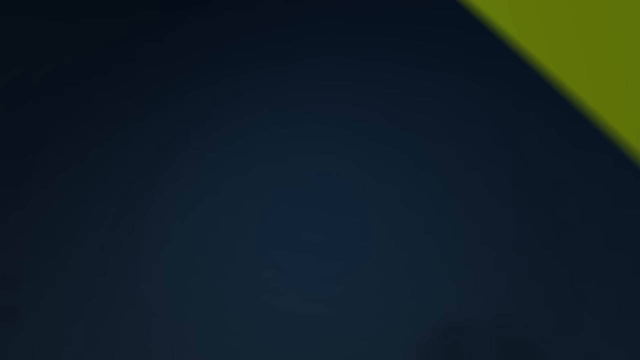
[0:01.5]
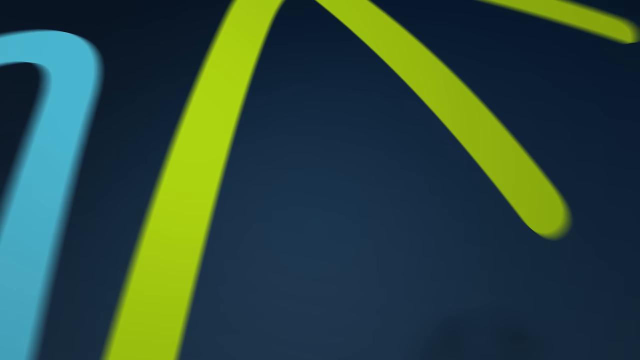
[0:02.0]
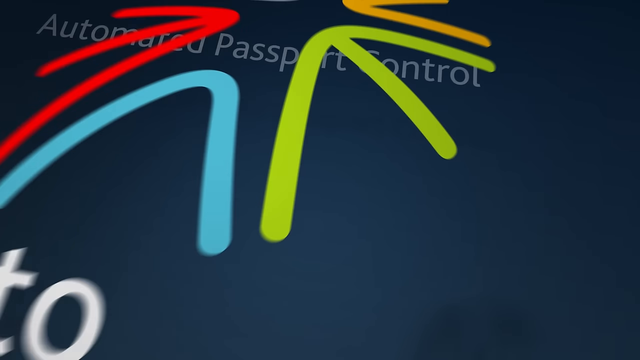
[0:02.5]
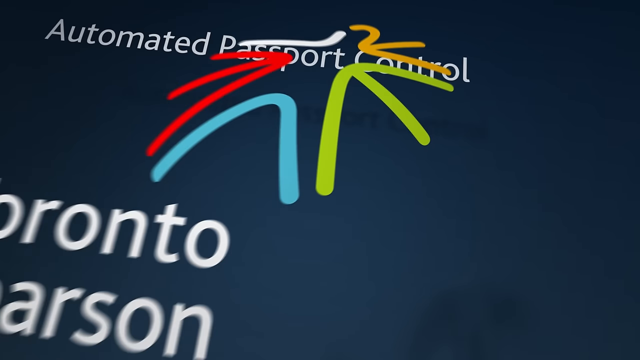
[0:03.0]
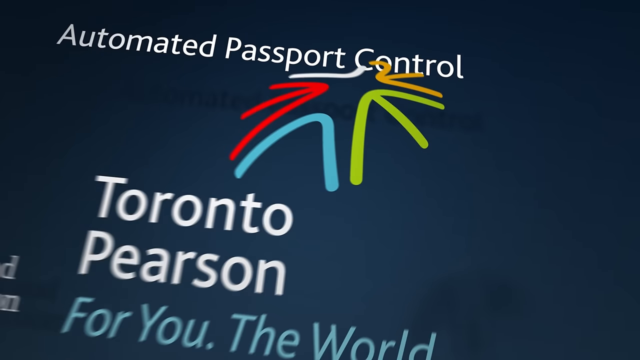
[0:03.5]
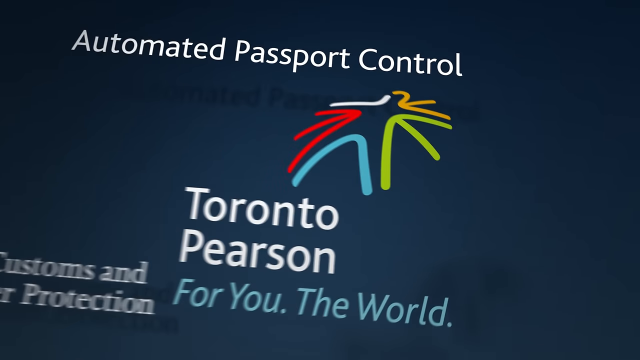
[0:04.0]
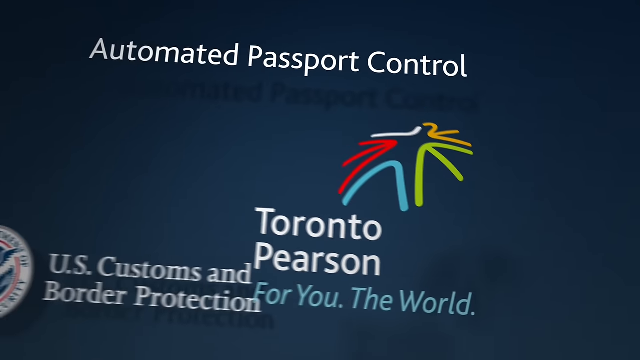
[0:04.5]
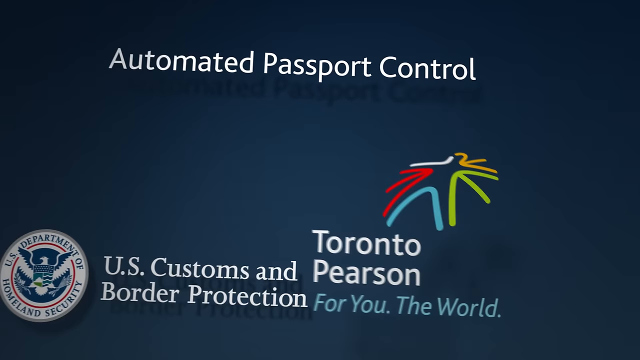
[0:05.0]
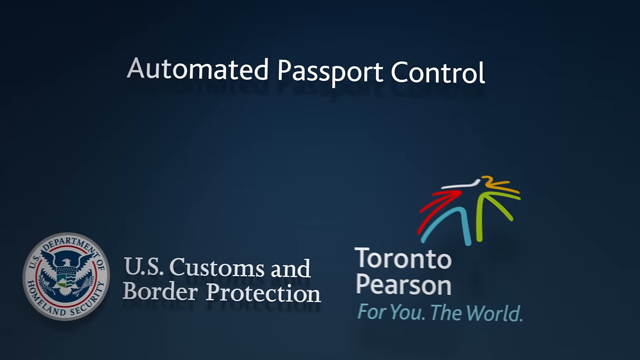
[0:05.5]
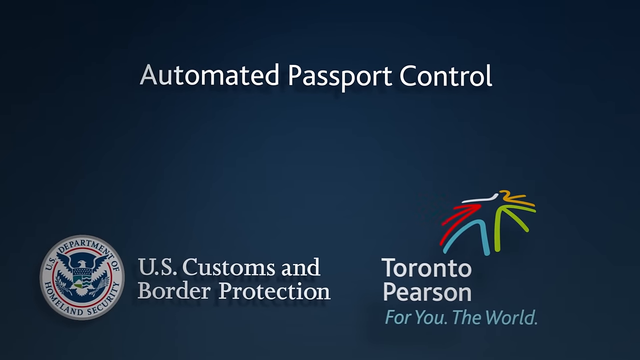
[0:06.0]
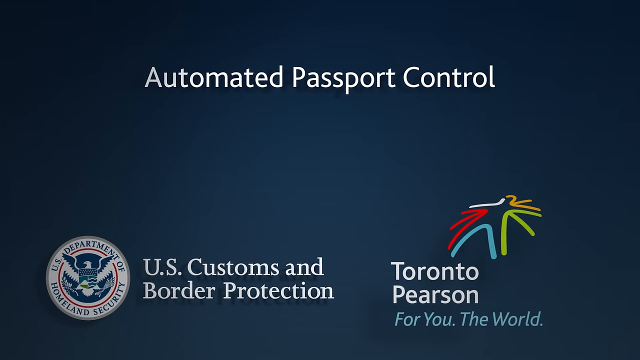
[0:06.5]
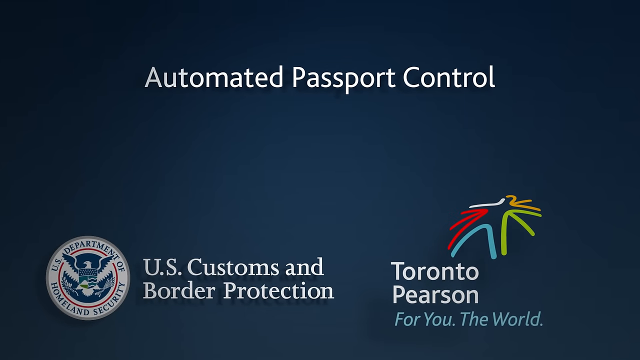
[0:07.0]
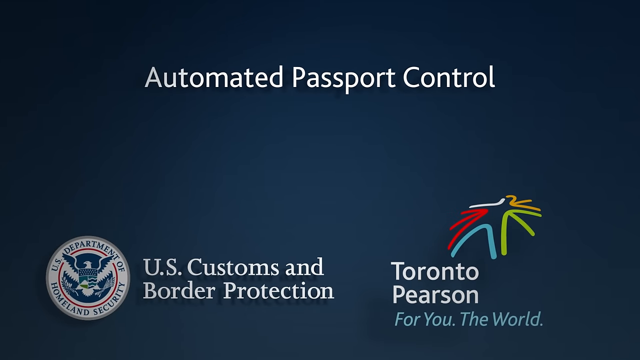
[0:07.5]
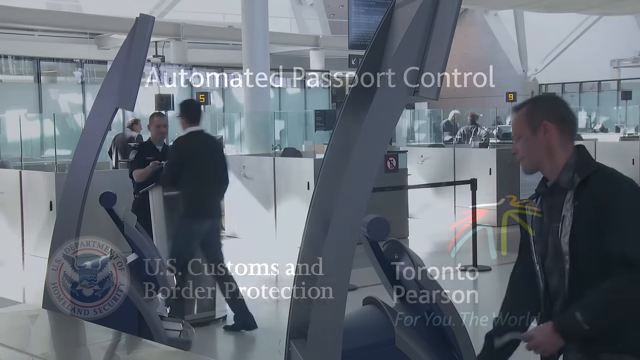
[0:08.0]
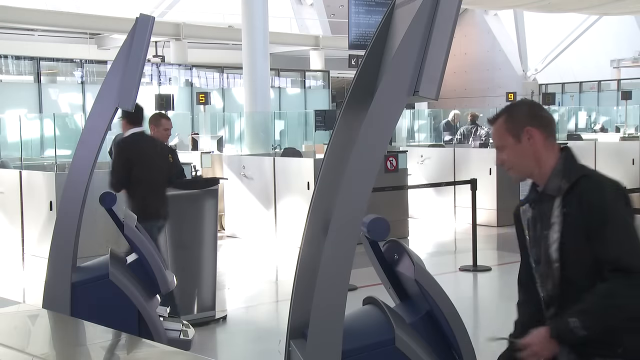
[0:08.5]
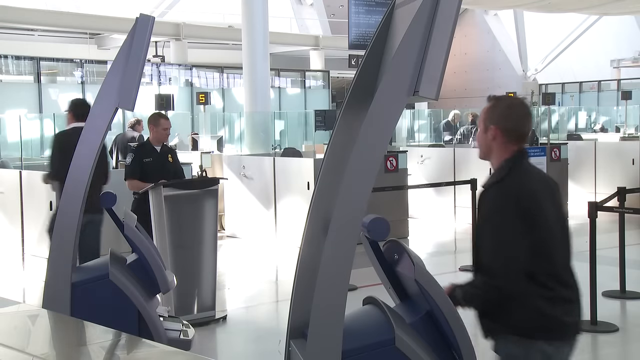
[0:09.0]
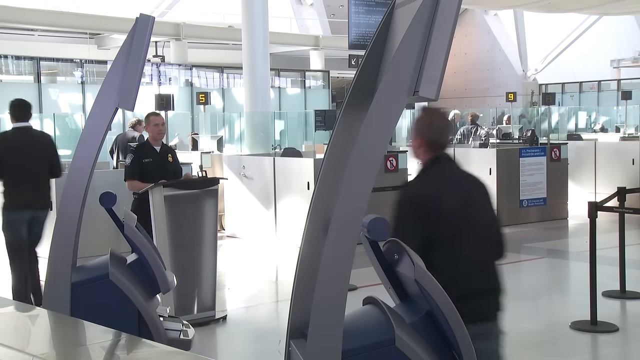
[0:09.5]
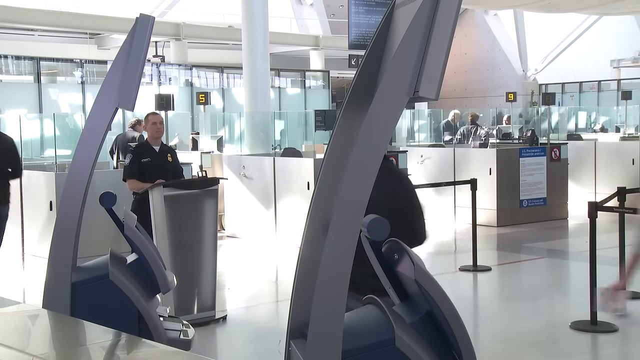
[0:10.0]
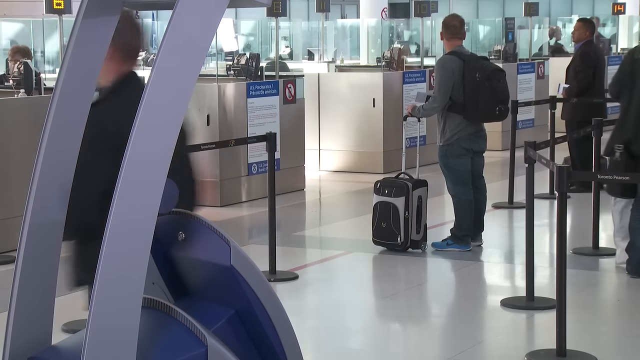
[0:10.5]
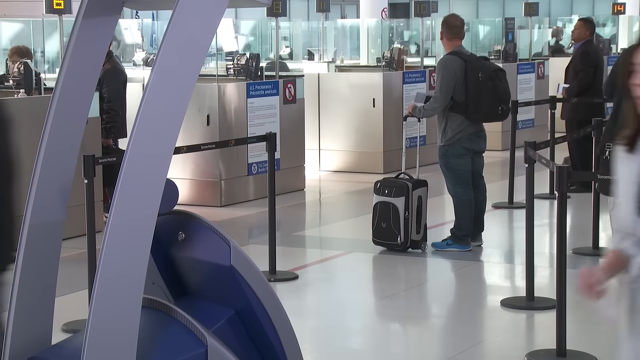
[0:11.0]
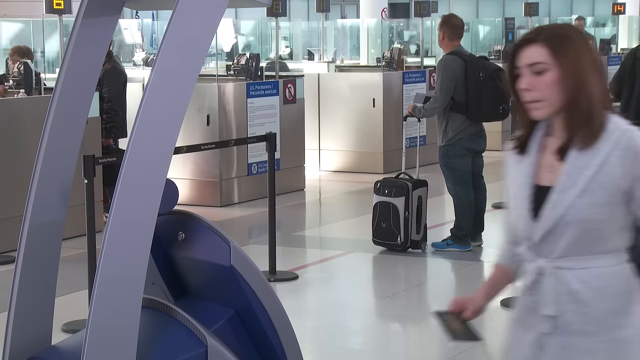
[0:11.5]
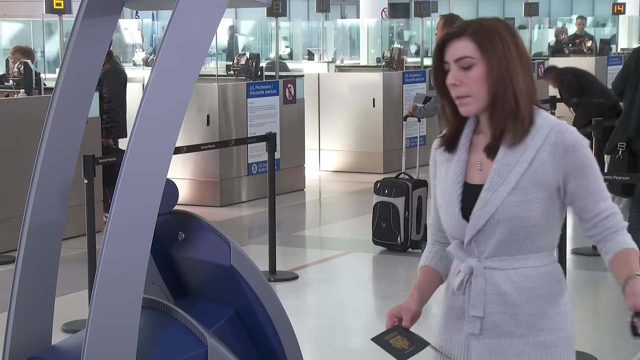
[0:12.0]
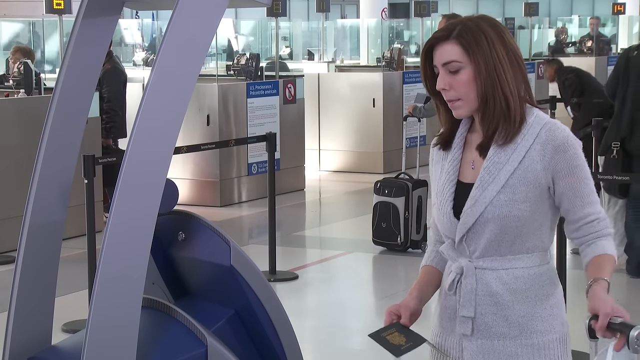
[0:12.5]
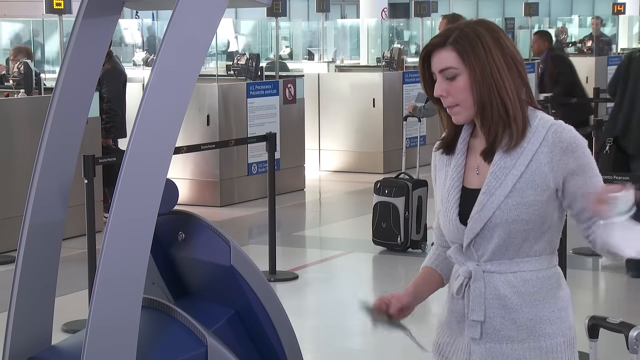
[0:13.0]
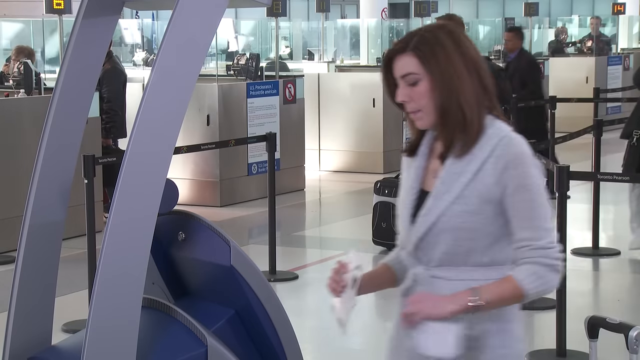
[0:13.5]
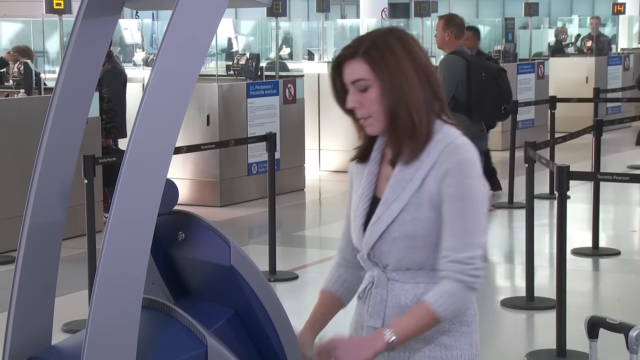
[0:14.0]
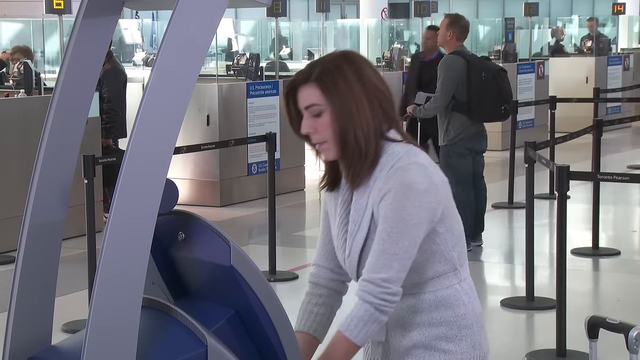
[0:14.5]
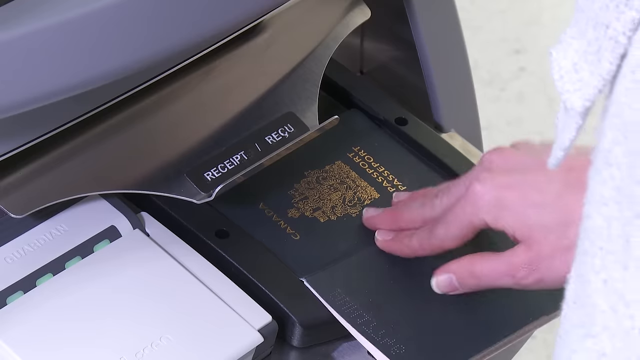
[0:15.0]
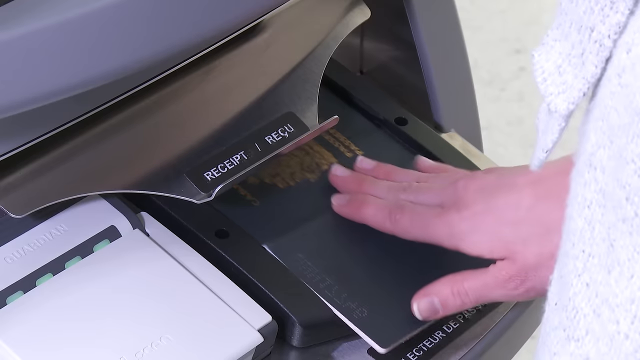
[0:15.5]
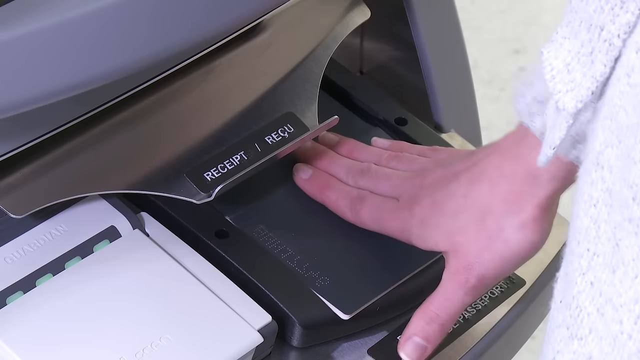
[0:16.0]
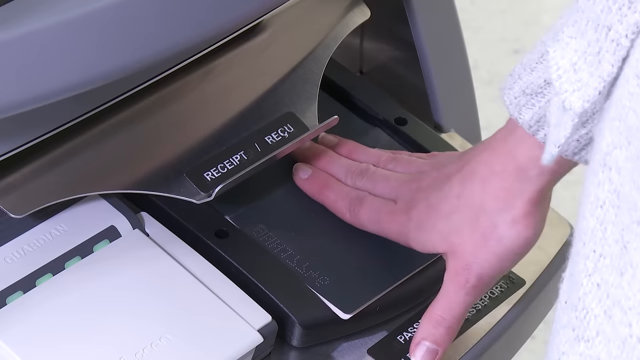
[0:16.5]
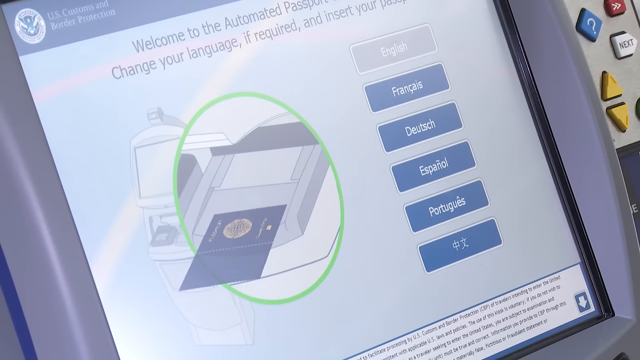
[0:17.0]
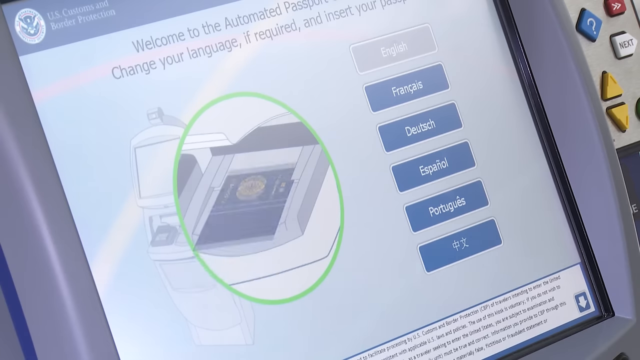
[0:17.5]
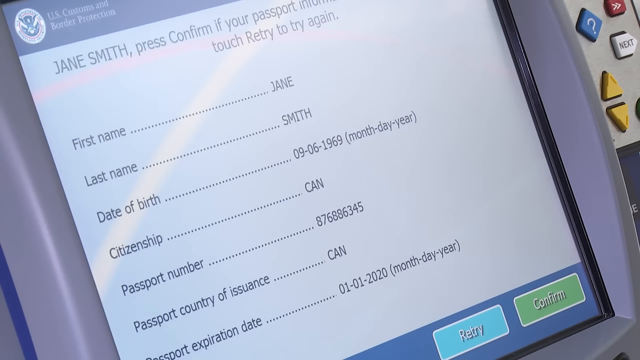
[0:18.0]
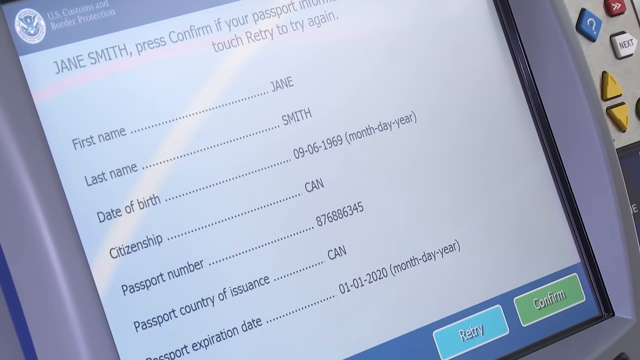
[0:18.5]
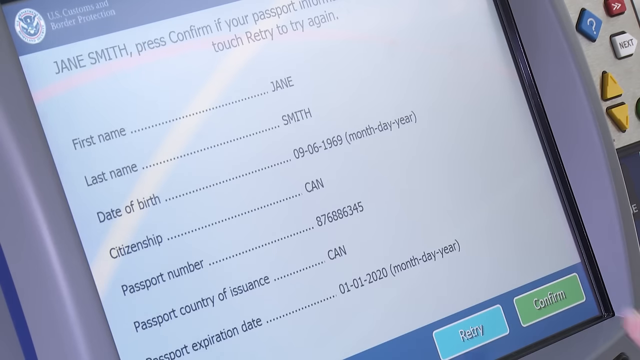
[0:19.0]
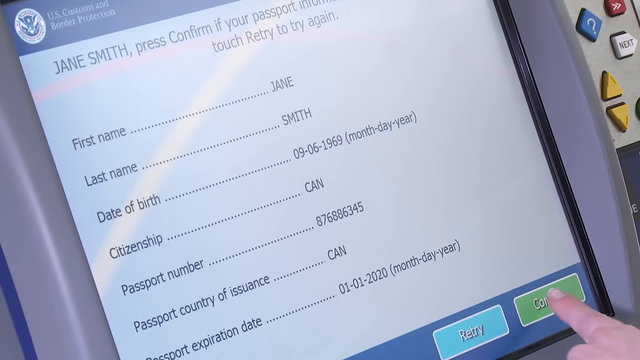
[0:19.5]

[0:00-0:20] The video opens with a sort of title screen reading "Automated Passport Control," presented by the U.S. Customs and Border Protection and Toronto Pearson, with the logos for both shown. The scene then opens on a very busy airport, where a woman approaches a kiosk with her luggage behind her and her passport out. She appears Caucasian, maybe in her 30s, with medium-length, roughly shoulder-length brown hair, and wears something like a cardigan wrapped tightly around her. At the kiosk she scans the passport, sliding it into place, shown in a close-up. The screen then changes from the instructions to the information scanned from the passport, and she goes over the information and presses the button to confirm that it is accurate to her identity and to what is on the passport.